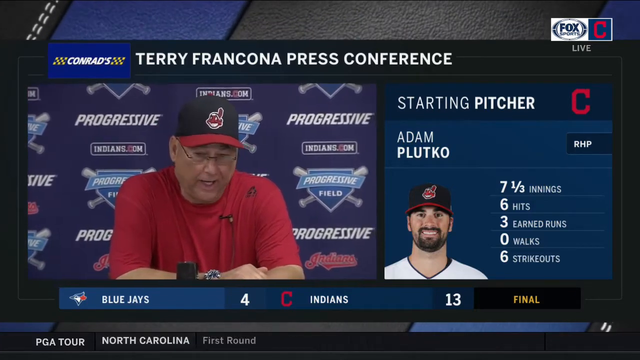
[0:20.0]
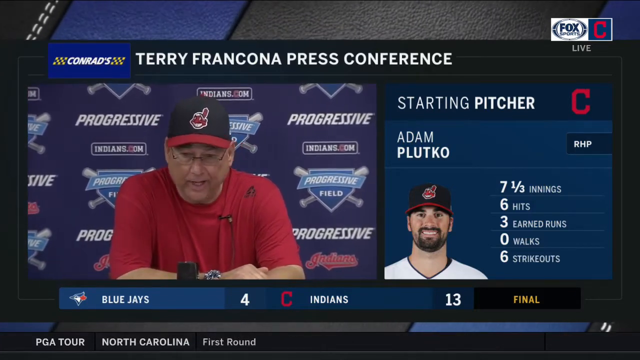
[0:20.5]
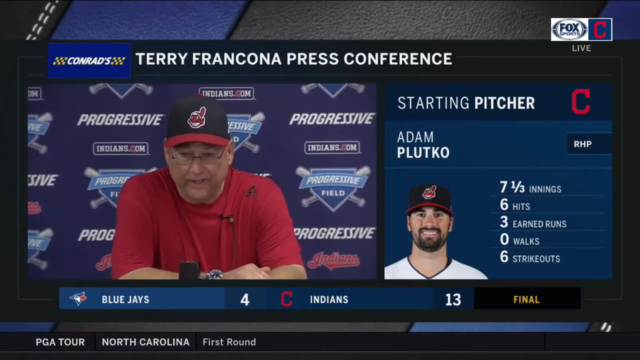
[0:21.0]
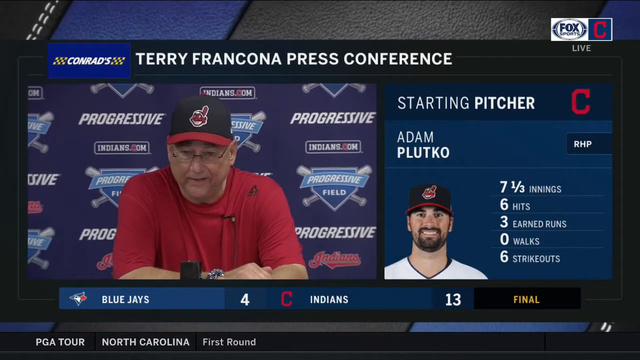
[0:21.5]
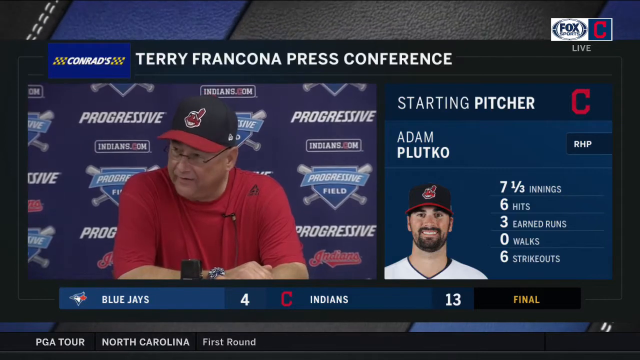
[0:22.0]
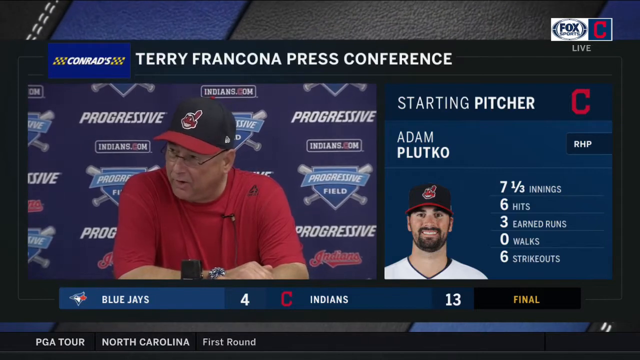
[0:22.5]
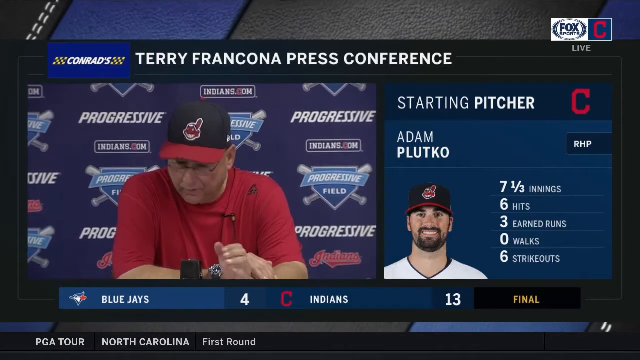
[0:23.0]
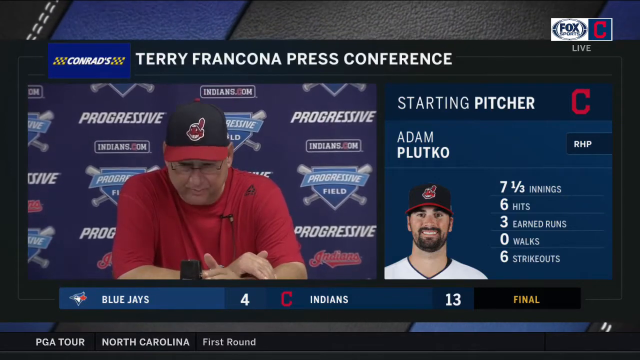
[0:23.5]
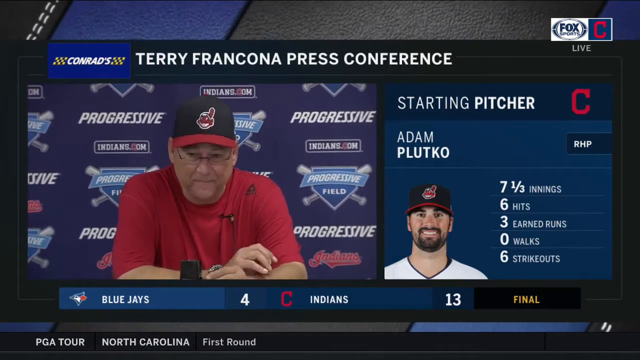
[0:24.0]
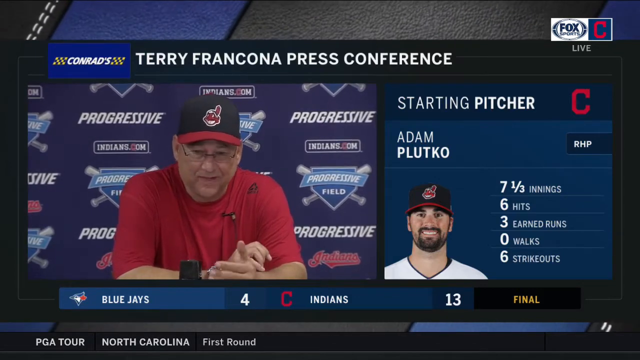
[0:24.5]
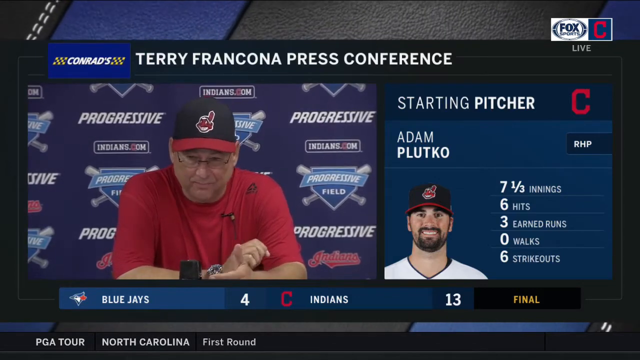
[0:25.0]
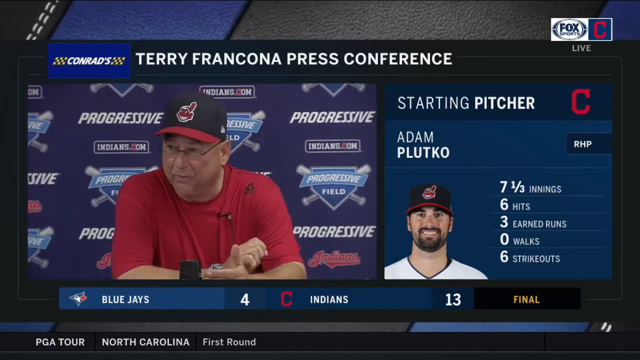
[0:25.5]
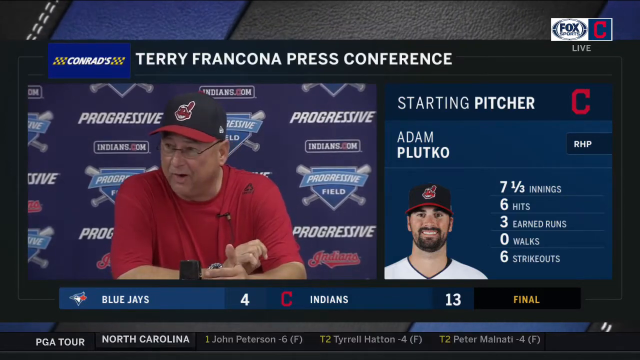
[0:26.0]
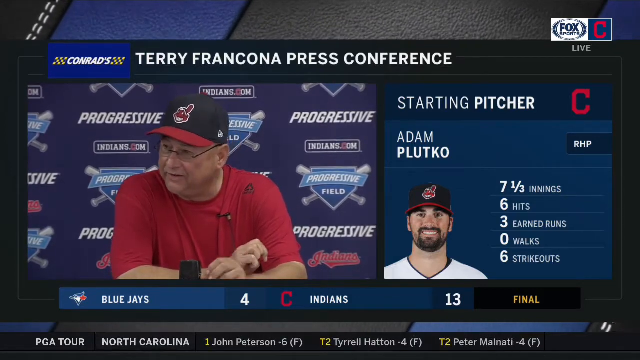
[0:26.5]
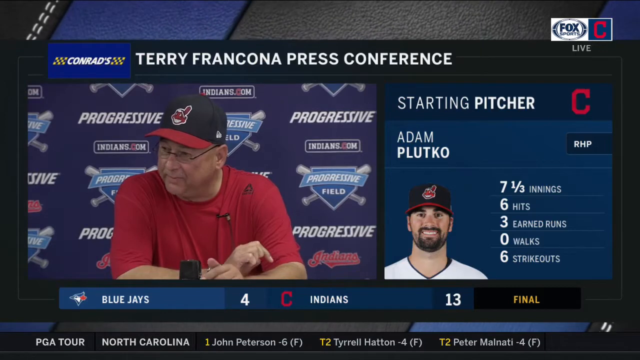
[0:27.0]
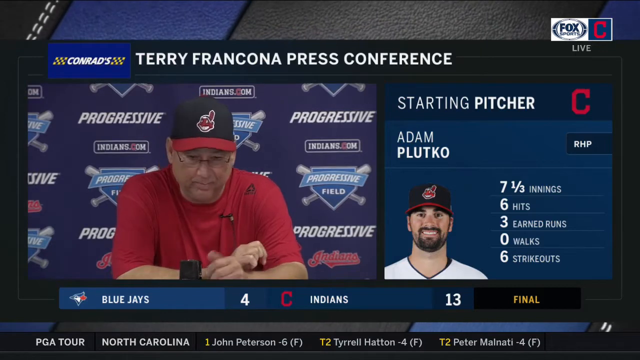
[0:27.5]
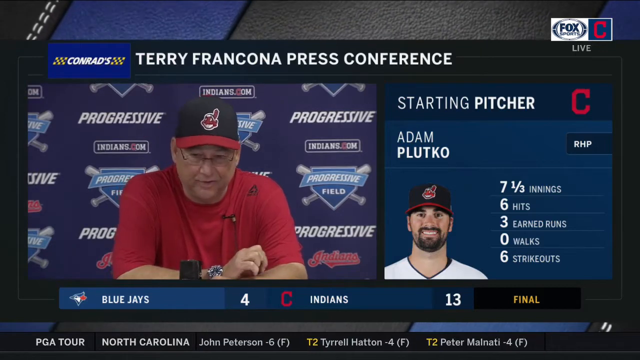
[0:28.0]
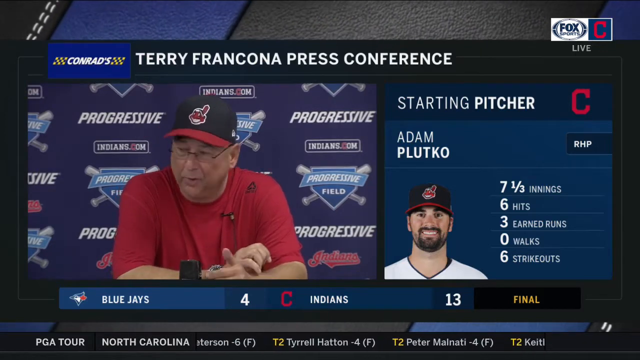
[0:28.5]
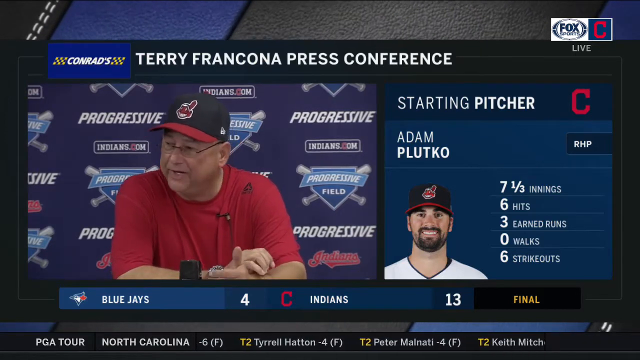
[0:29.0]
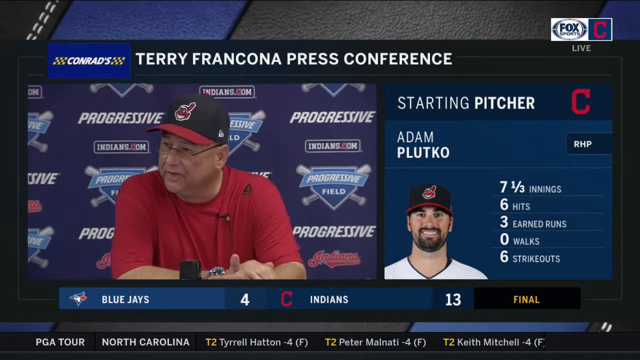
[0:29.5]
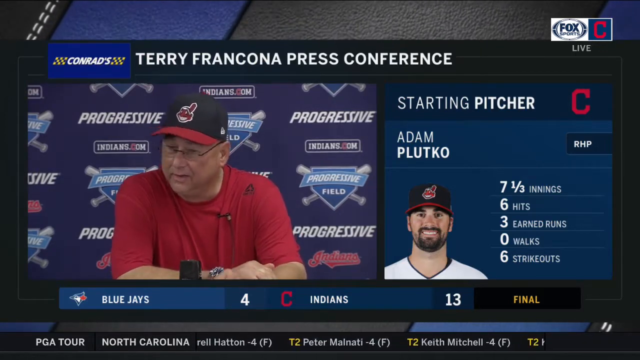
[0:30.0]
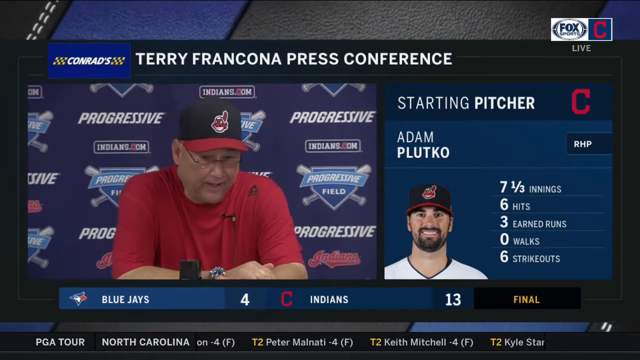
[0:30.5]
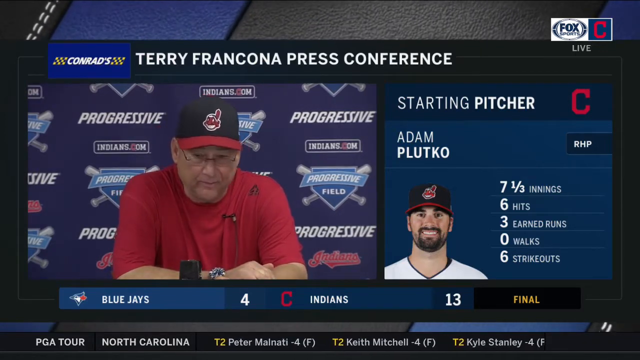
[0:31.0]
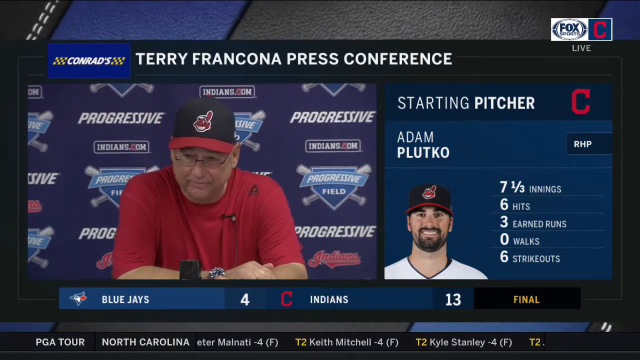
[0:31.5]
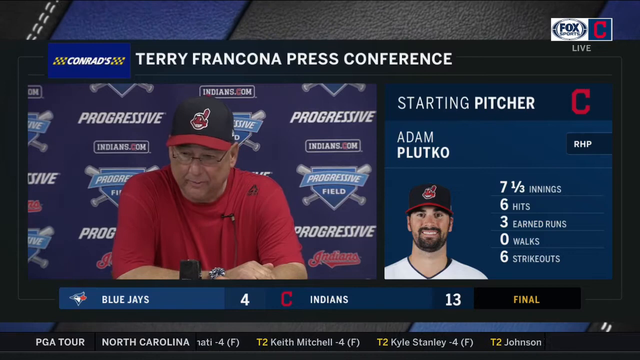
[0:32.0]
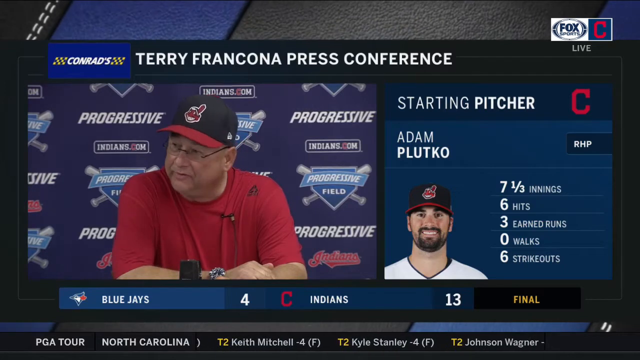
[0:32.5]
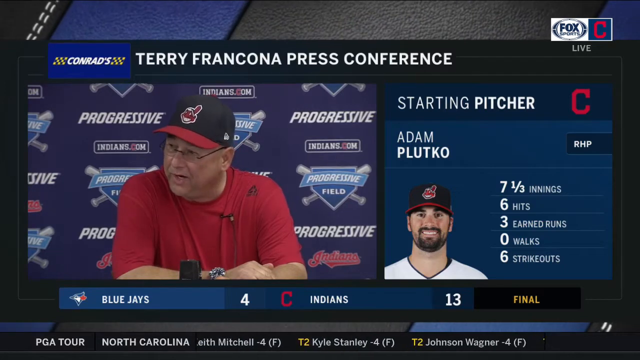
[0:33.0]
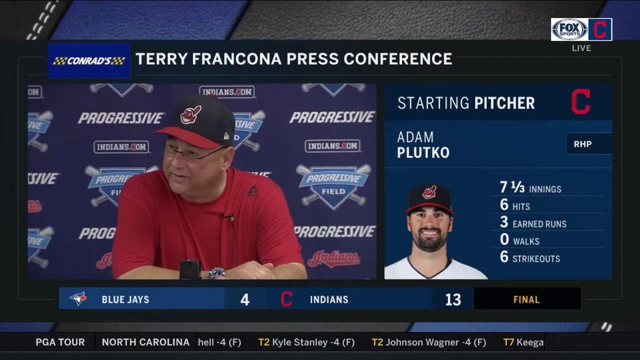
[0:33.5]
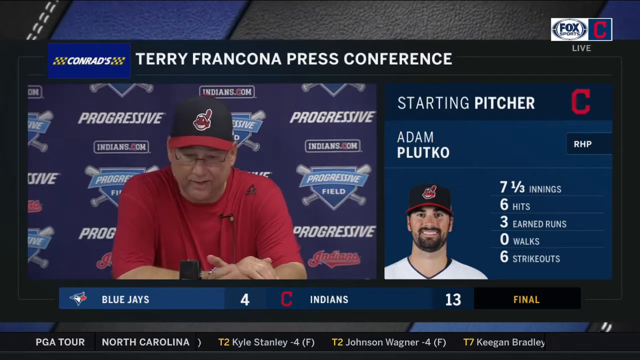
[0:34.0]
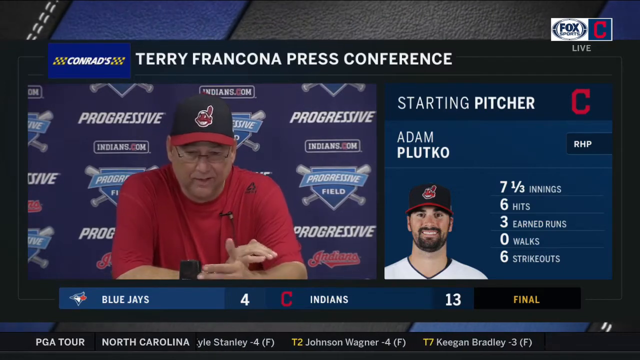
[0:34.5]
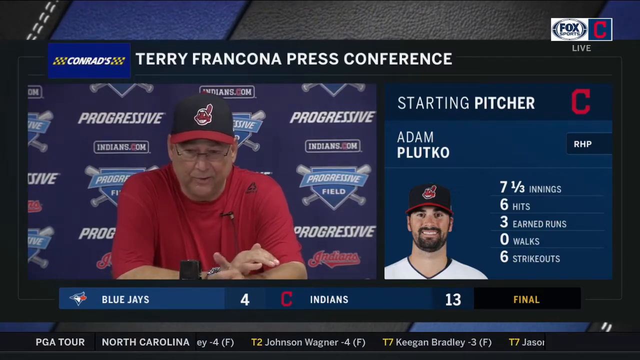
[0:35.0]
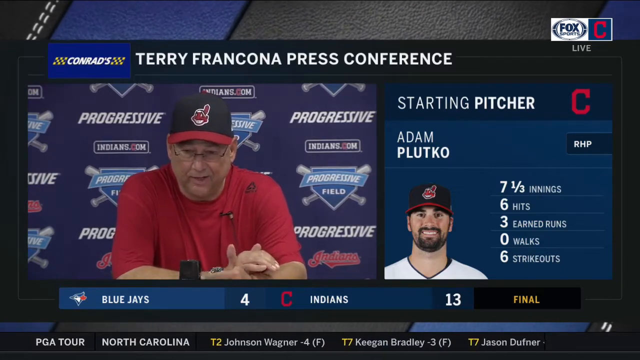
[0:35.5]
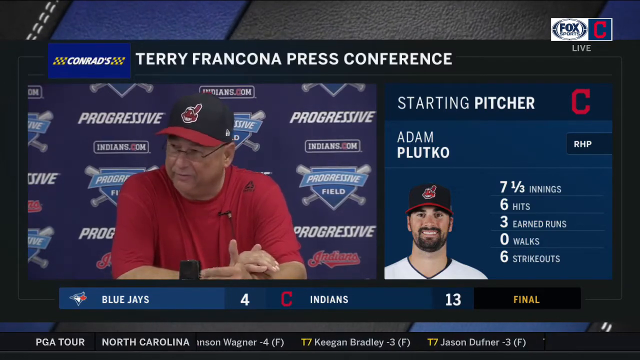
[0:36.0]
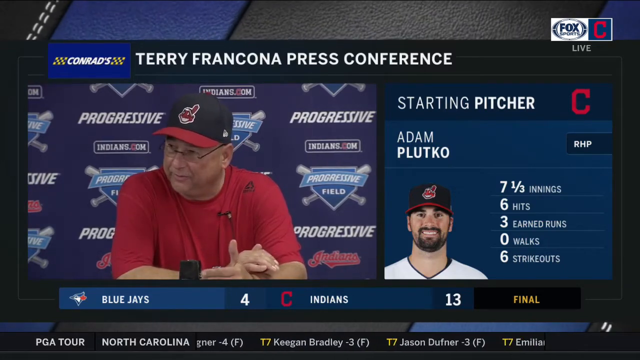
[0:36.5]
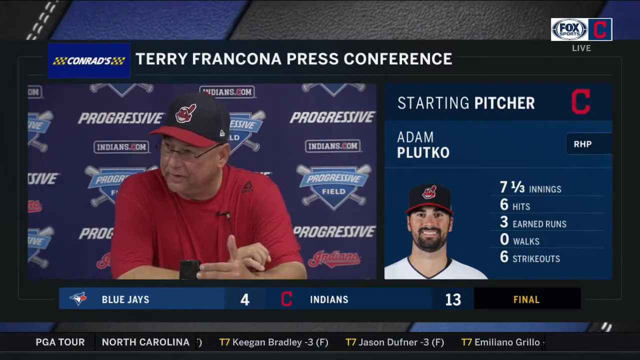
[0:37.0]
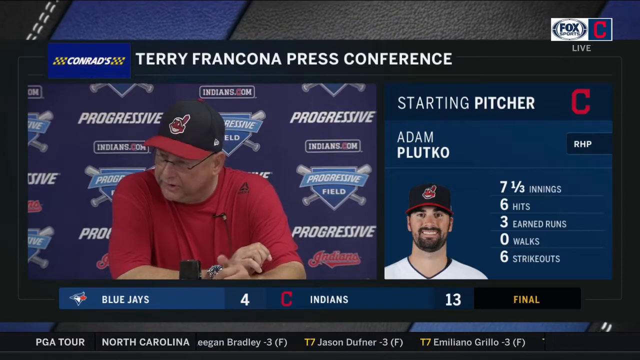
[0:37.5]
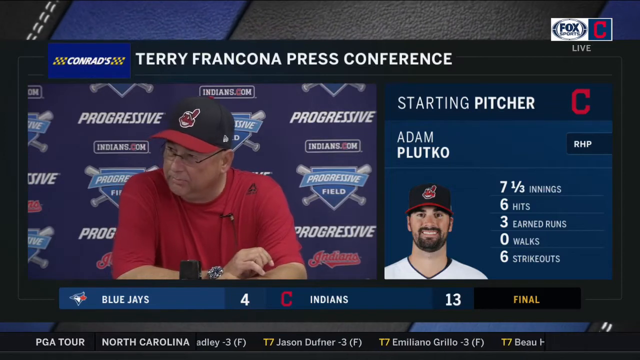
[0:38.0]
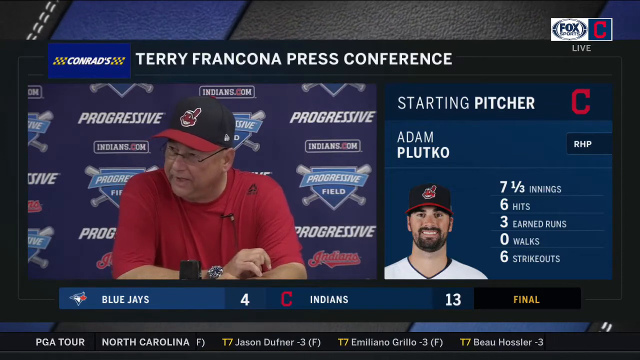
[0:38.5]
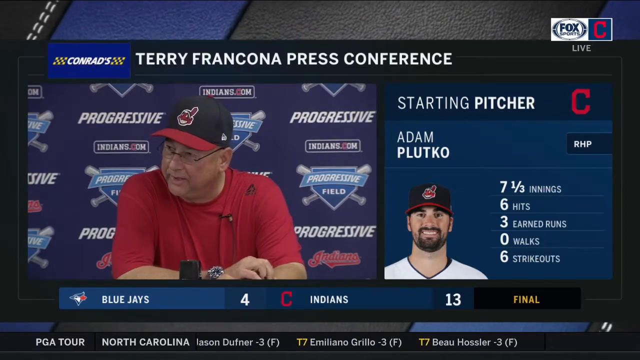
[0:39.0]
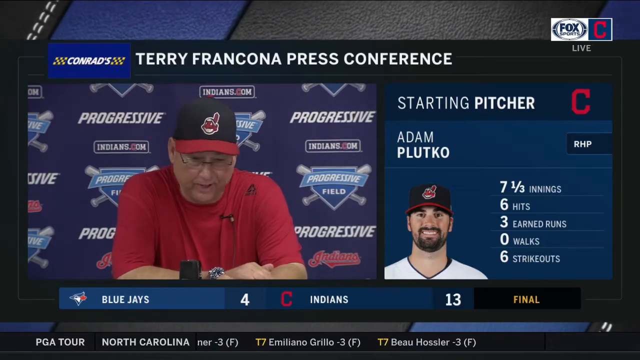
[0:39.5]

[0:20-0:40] The same older man, who looks maybe in his 50s, is on the left side of the screen. Above him the text reads "Terry Francona press conference." On the right side, Adam Plutko's stats appear in white: seven and one third innings, six hits, three earned runs, several walks and six strikeouts. Adam appears to wear the same hat as the man speaking, who is apparently Terry, since he is the one talking. The starting pitcher graphic has a big red C, and the same big red C is in the upper right-hand corner, with "Fox Sports" to its left.